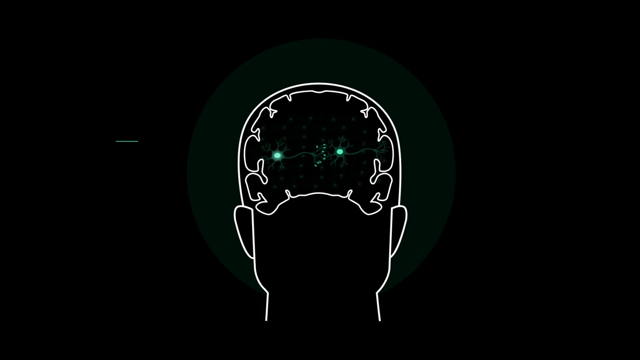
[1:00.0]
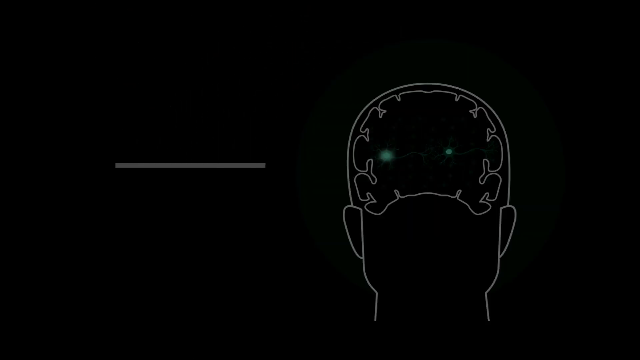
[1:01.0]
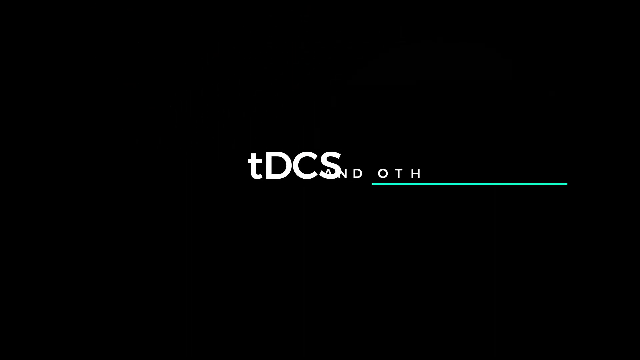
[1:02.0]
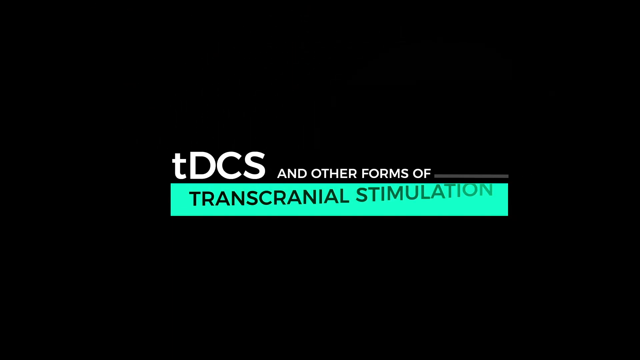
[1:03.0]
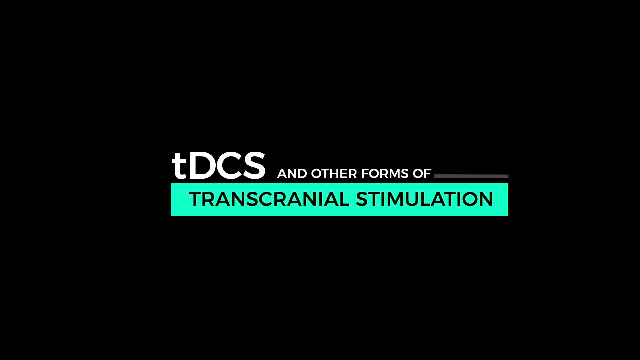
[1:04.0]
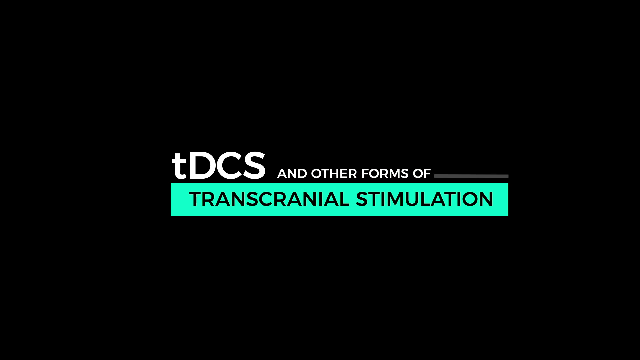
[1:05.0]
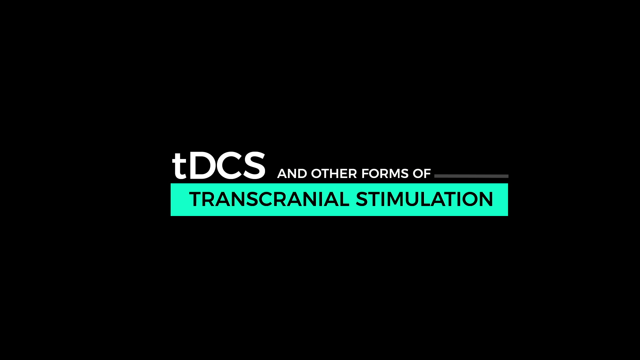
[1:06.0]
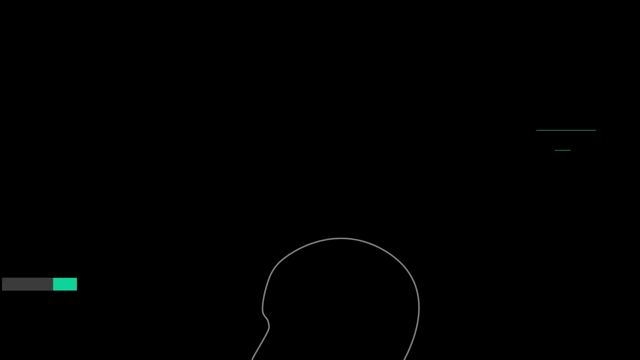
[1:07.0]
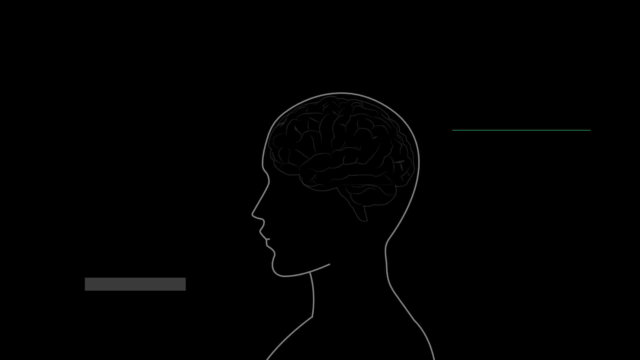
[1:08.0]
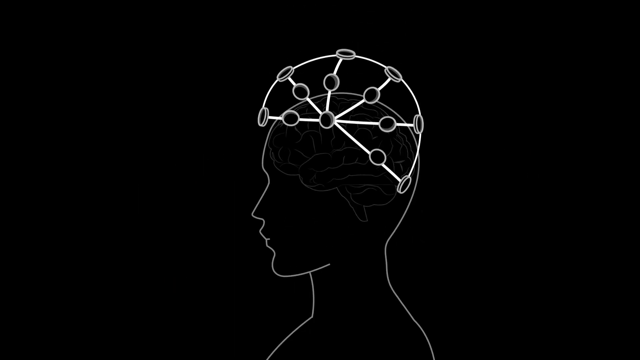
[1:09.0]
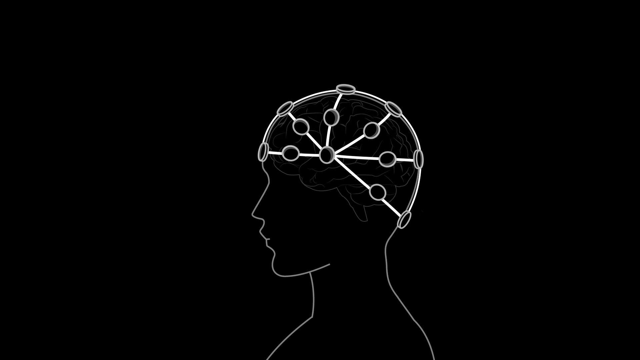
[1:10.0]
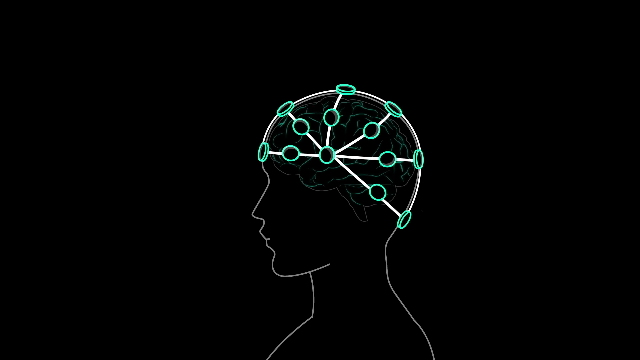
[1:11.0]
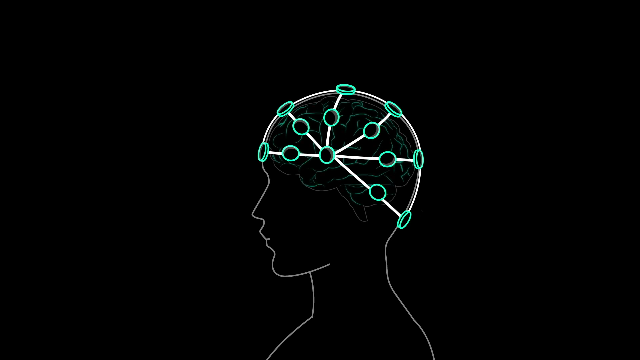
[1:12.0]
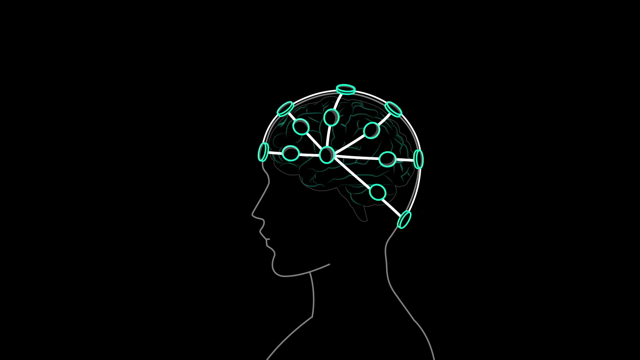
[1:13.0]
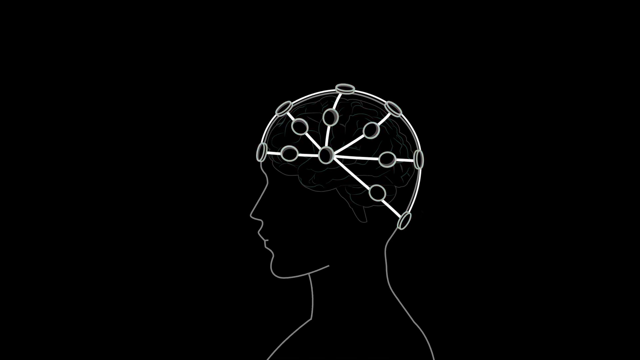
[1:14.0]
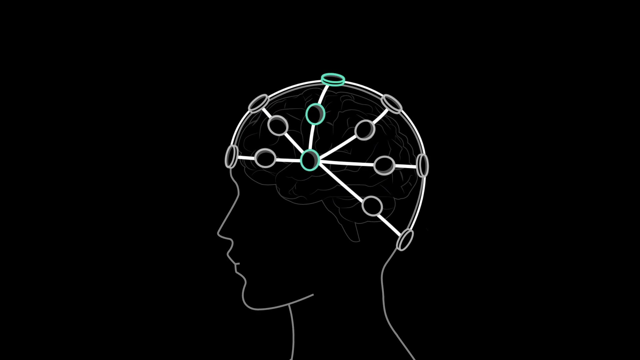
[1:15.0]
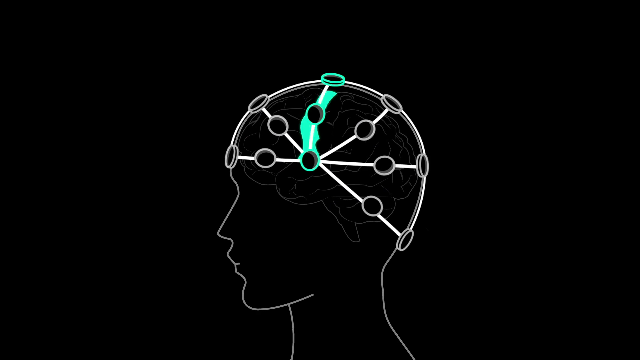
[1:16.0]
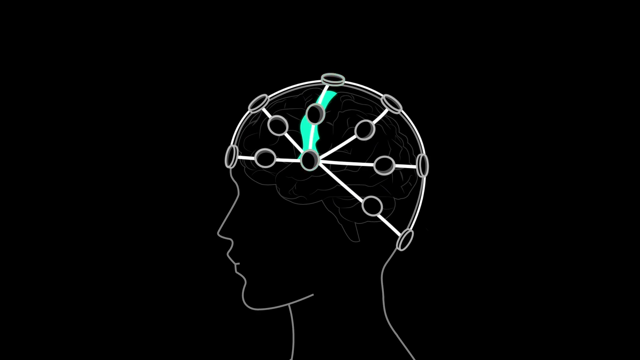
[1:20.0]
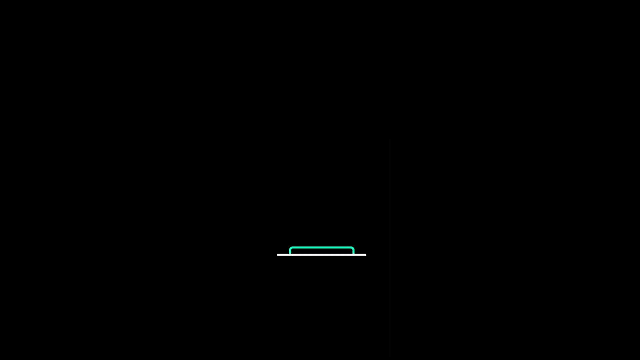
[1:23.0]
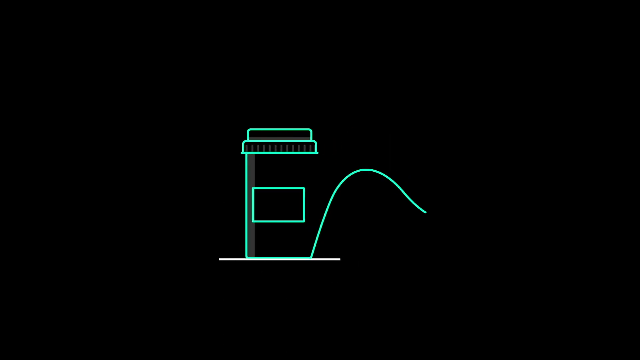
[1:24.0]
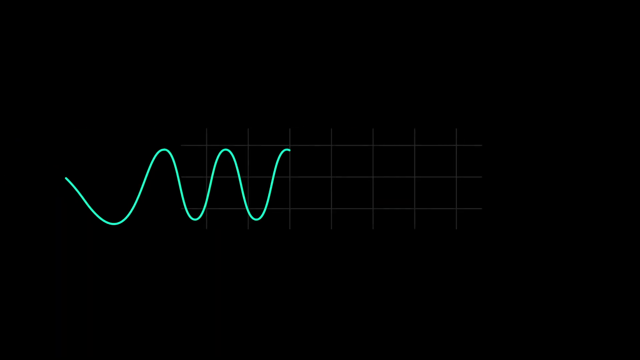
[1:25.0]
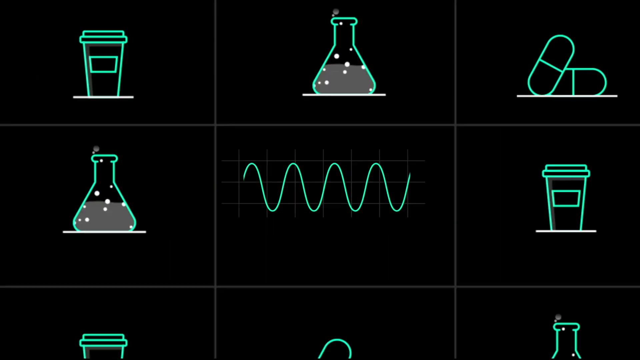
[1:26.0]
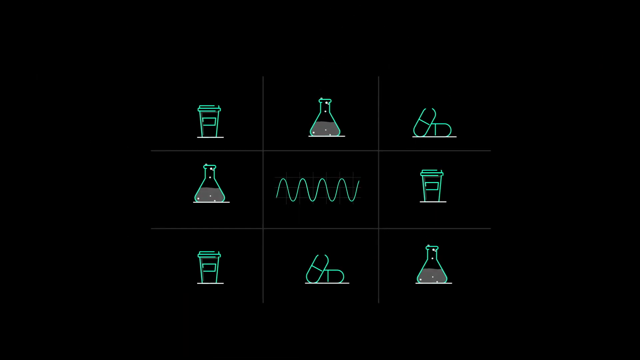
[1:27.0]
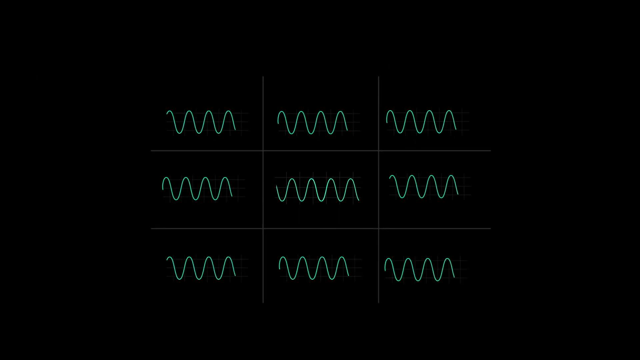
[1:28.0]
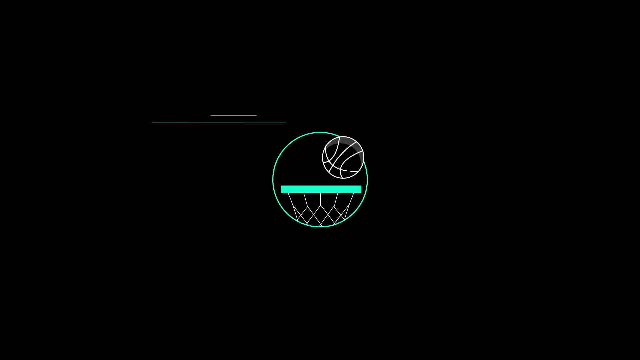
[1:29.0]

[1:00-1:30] A cartoon-style drawing of the human brain has green dots inside it, indicating how the brain communicates internally. A logo for TDCS and other forms of transcranial stimulation appears. The brain is shown with sensors all inside it, within the skull, depicting communication through electrical signals. At one point, what looks like a medicine bottle is on the right, with a wavelength going off to the right. Several logos are in the center of the screen, looking like chemistry jars, pills, cups of coffee, and something like a tic-tac-toe board. The tic-tac-toe board changes into wavelengths, and then a basketball next to a basketball goal and the head of a guitar appear.